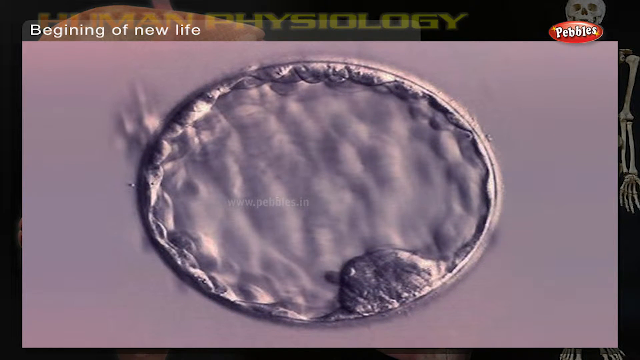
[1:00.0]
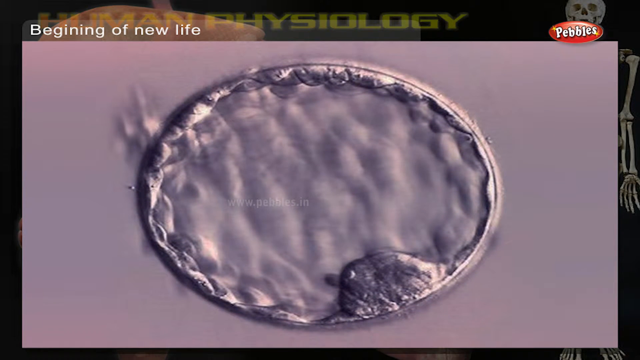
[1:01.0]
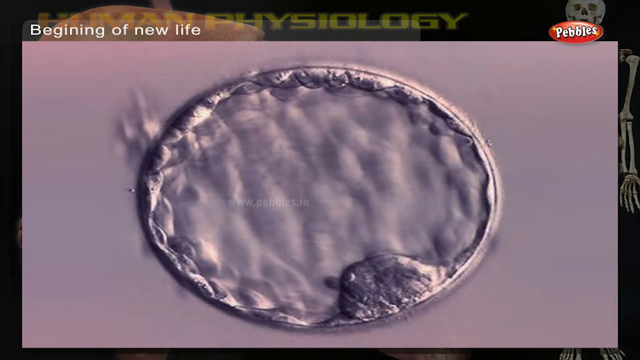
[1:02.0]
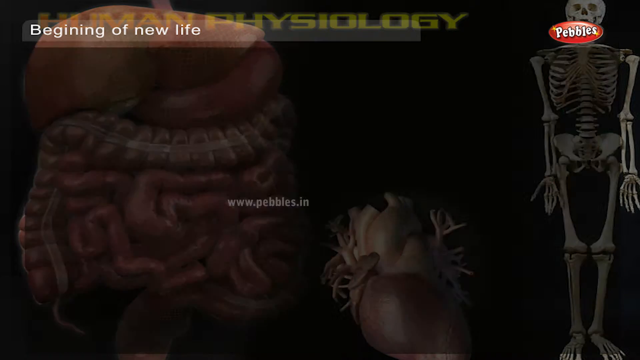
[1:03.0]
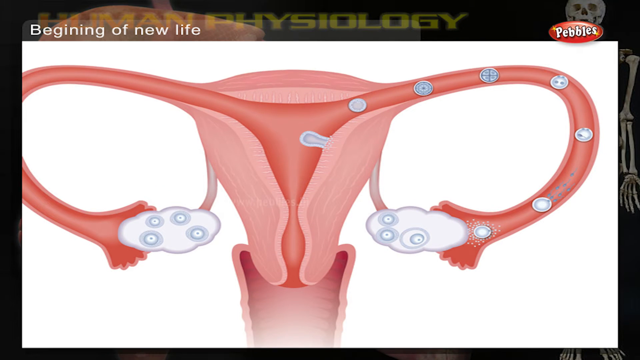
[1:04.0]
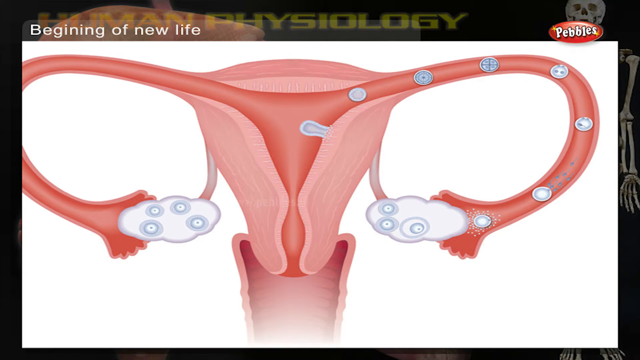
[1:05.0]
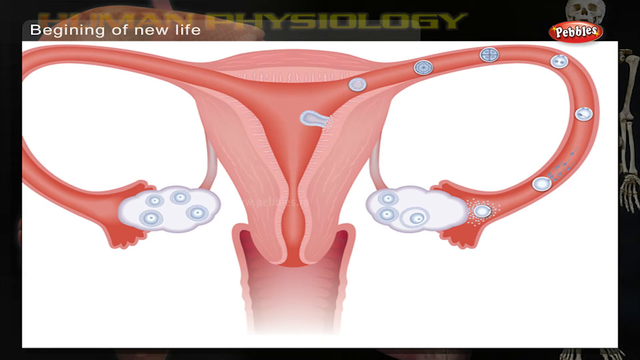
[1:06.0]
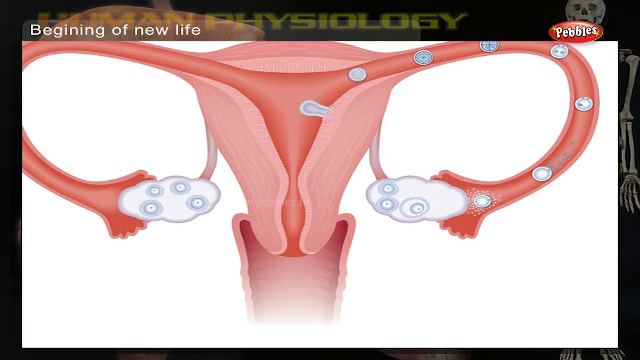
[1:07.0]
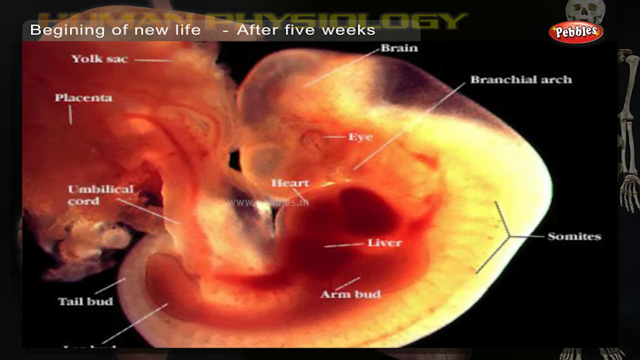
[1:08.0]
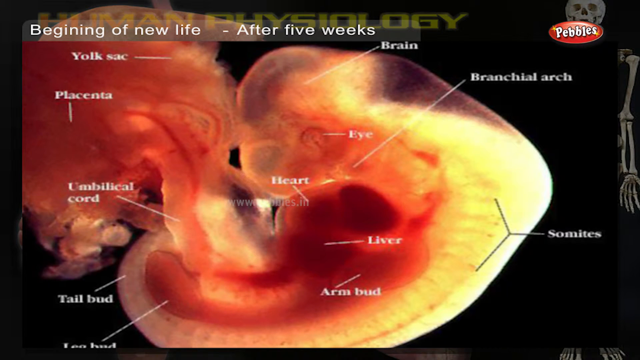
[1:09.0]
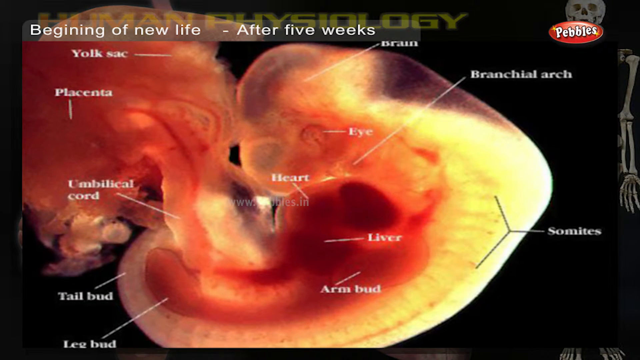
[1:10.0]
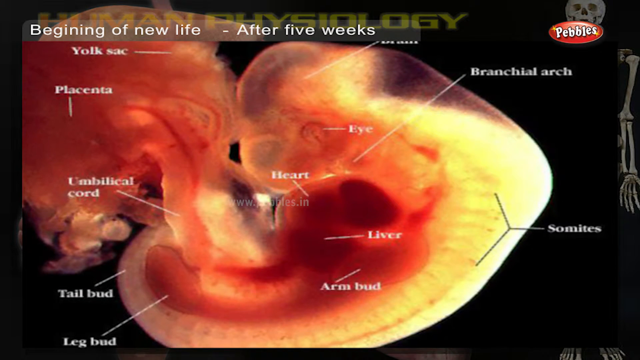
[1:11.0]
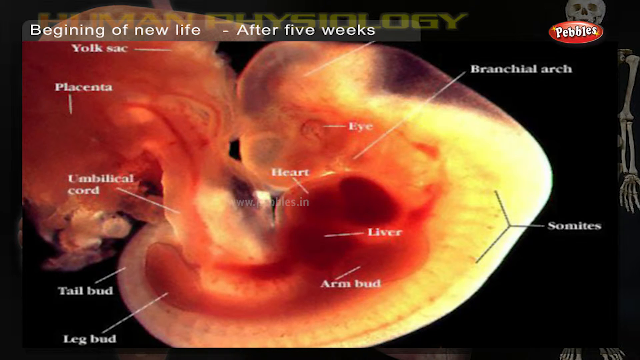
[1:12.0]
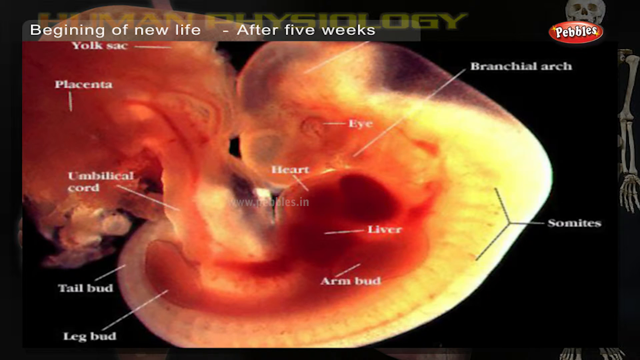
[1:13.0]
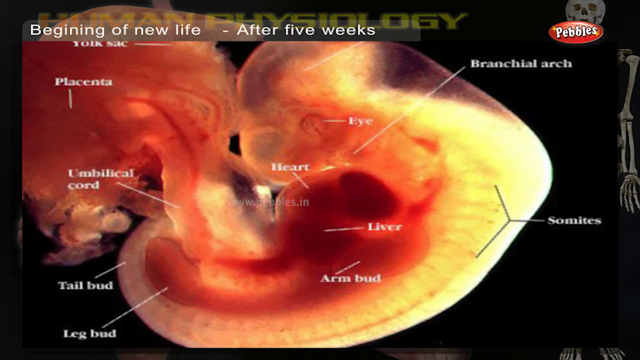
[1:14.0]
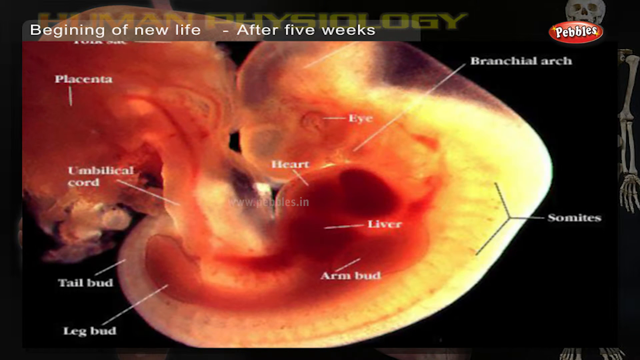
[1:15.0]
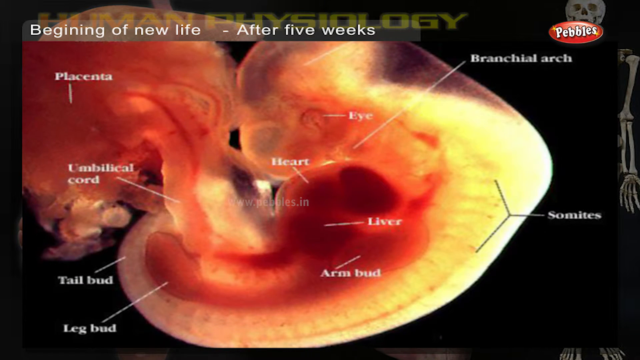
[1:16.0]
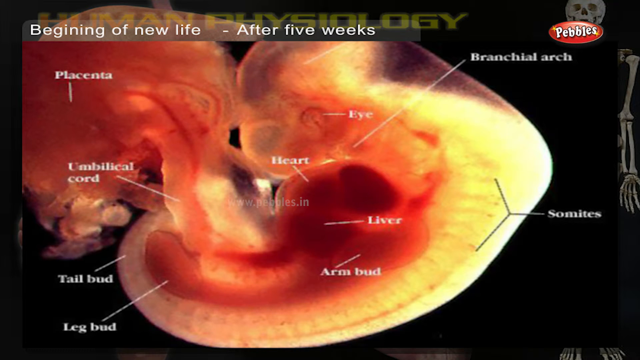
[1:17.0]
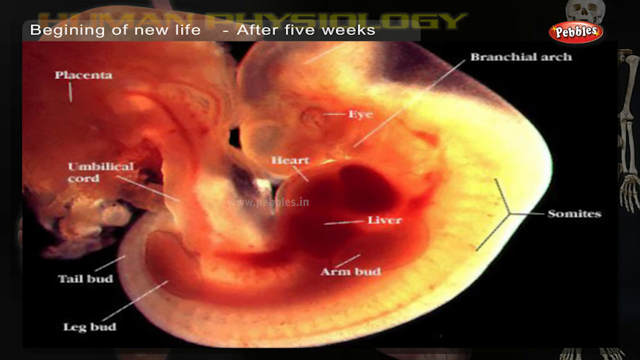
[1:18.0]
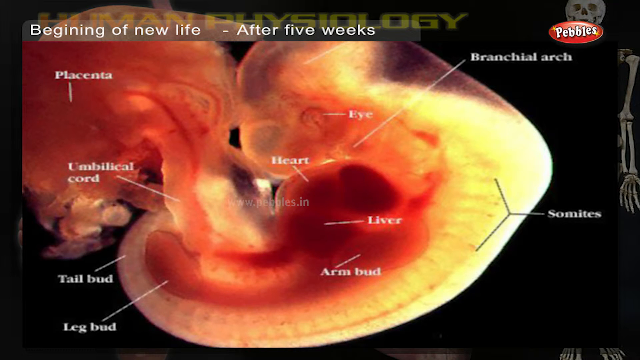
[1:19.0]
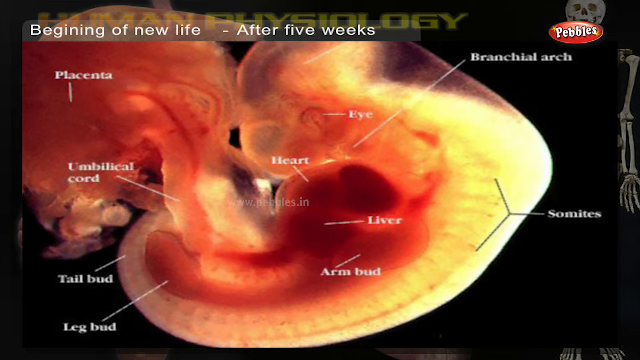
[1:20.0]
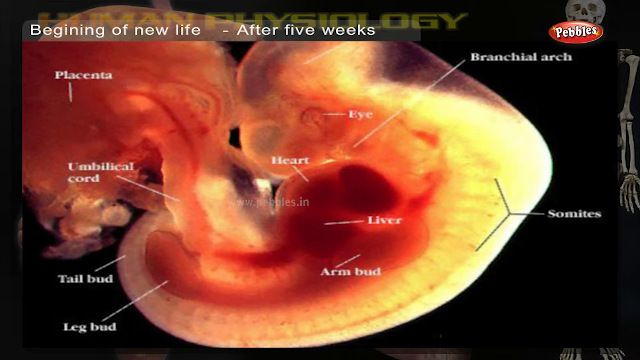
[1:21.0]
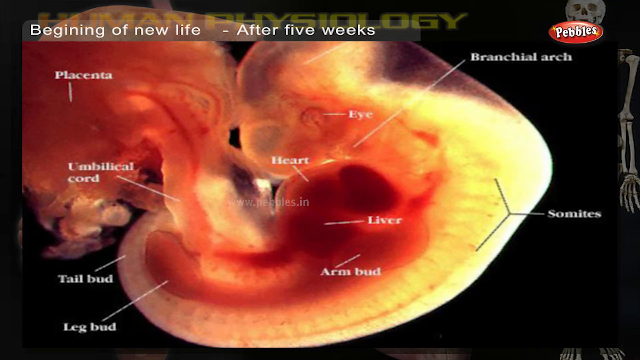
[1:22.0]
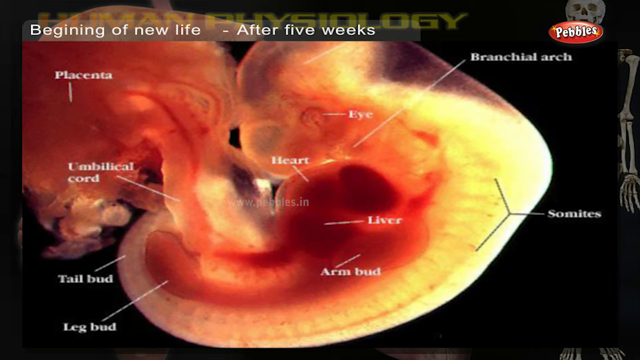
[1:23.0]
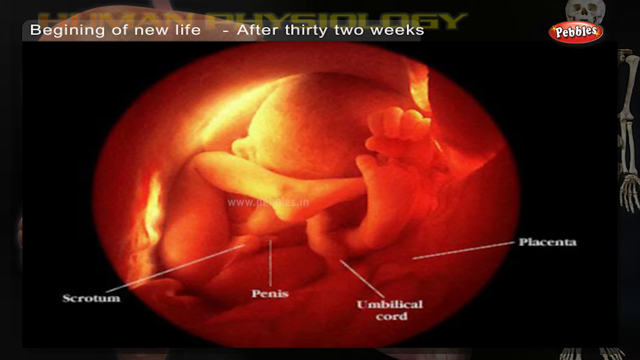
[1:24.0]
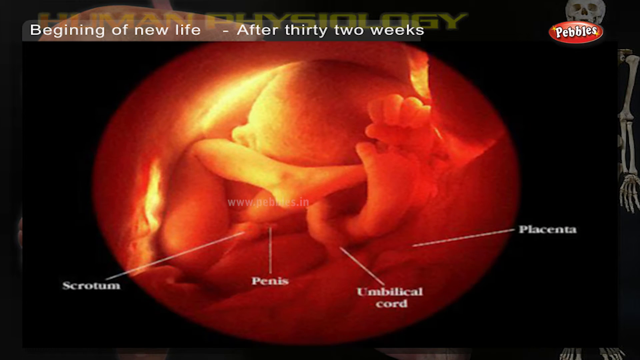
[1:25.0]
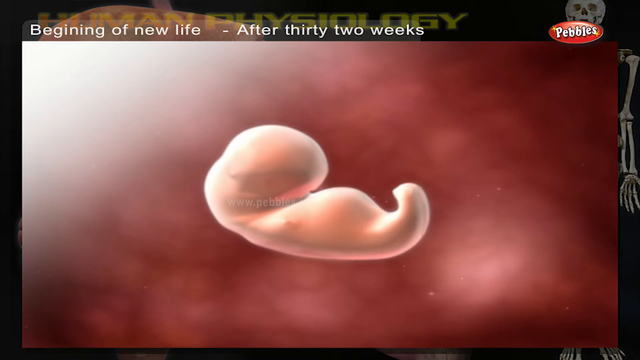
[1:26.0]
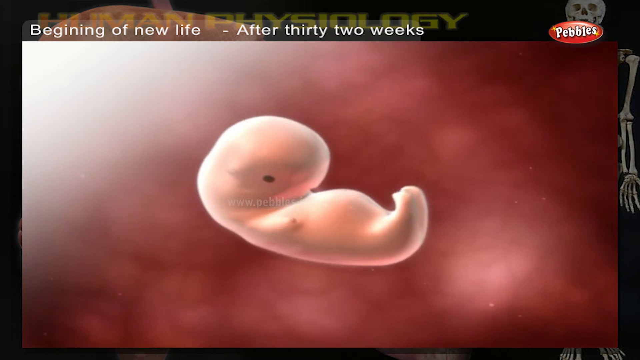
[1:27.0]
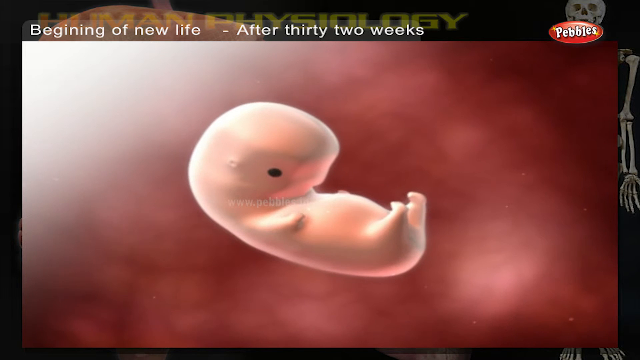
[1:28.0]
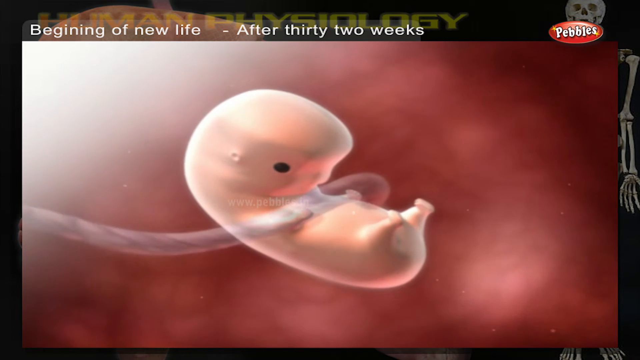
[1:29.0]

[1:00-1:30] The metallic circle with the bumpy texture is on screen. The video goes back to the picture of the cervix with the tubes, showing a white circle going through one side of a tube, with a white cloudy figure coming out from both sides. A new picture shows what is apparently a fetus in an early stage, perhaps the first trimester, with little formed. Labels mark the brain, the brachial arch, the eye, the heart, the liver, the arm bud, the somites, the umbilical cord, the placenta, the yolk sac and the tail bud, along with the label "beginning of a new life after five weeks"; a leg bud is also labeled. The video cuts to a different angle of the baby in the womb after 32 weeks, showing more clearly what the baby looks like, with labels for the scrotum, the penis, the umbilical cord and the placenta. It then cuts to footage that slowly shows a fetus forming.